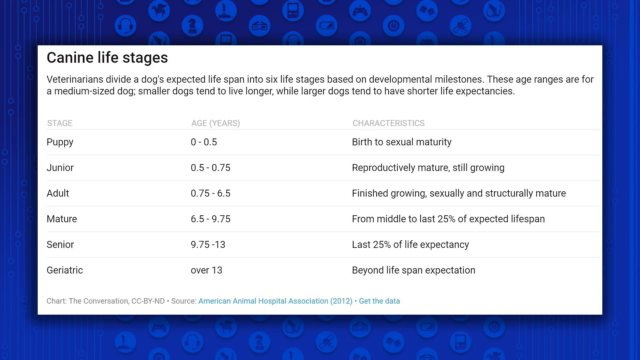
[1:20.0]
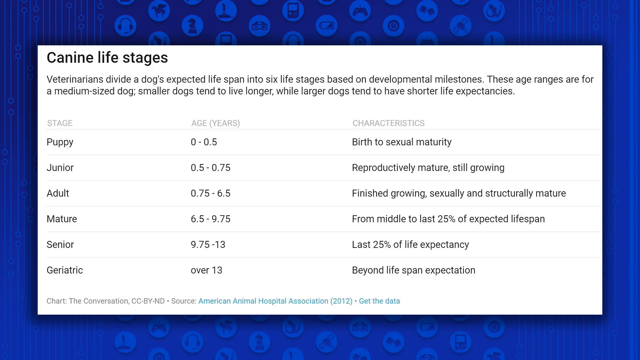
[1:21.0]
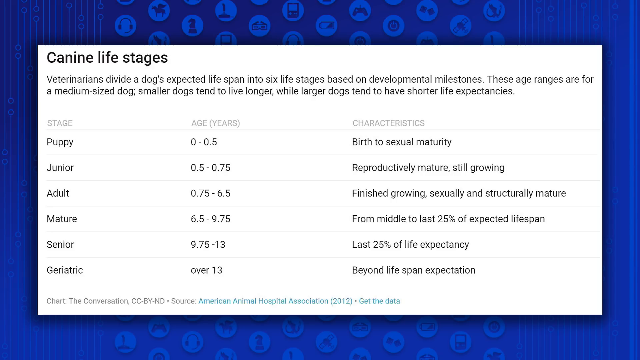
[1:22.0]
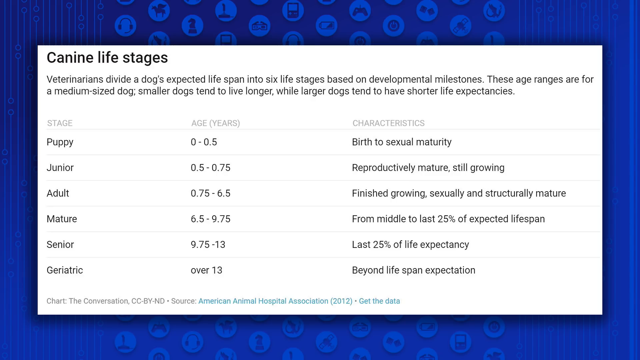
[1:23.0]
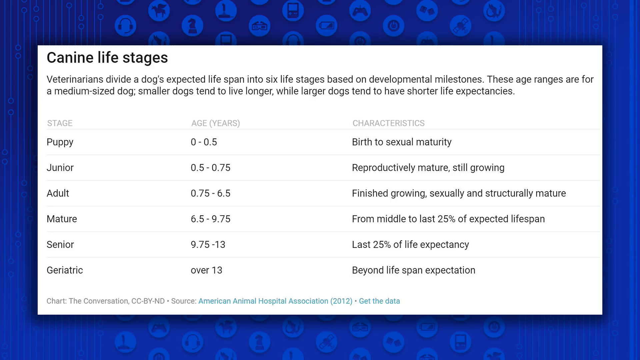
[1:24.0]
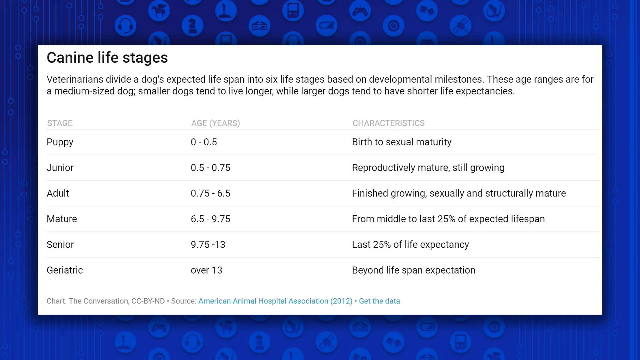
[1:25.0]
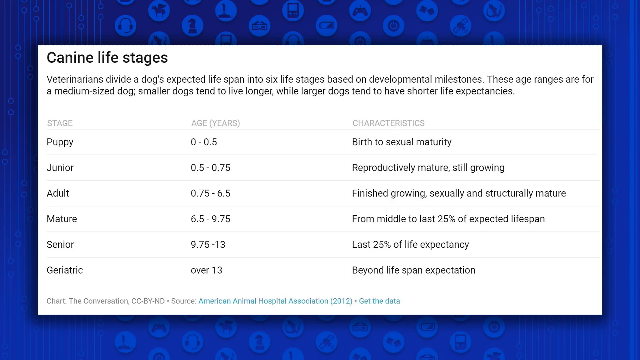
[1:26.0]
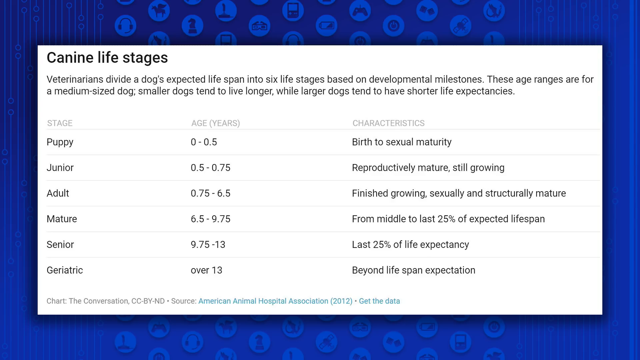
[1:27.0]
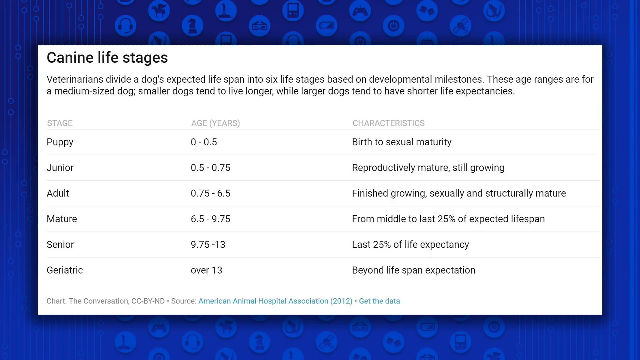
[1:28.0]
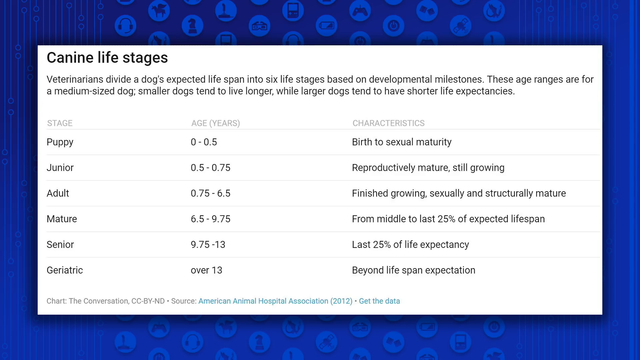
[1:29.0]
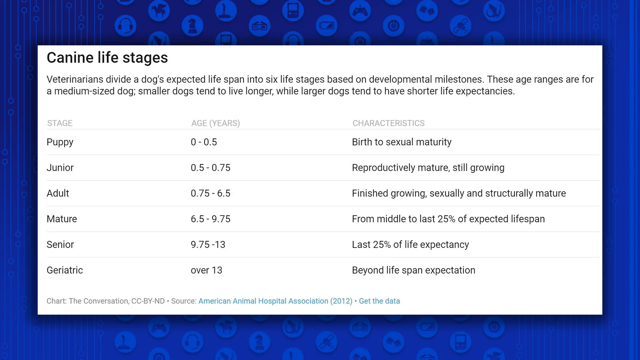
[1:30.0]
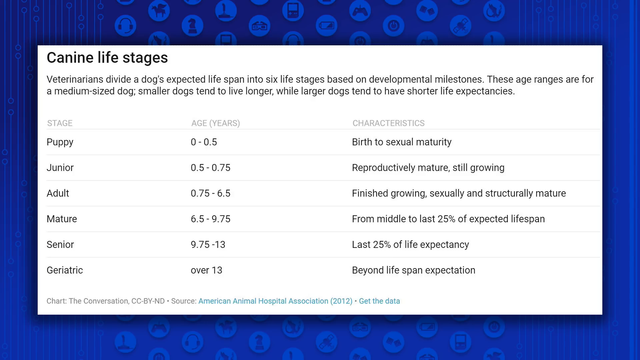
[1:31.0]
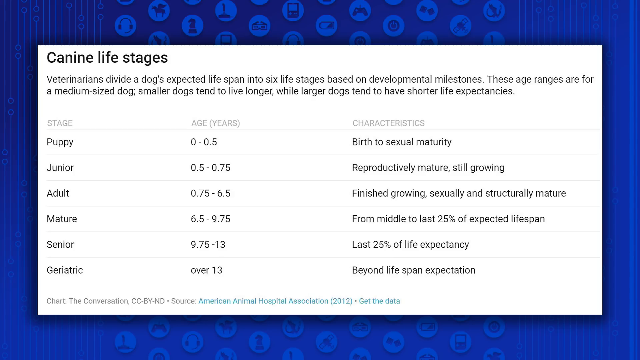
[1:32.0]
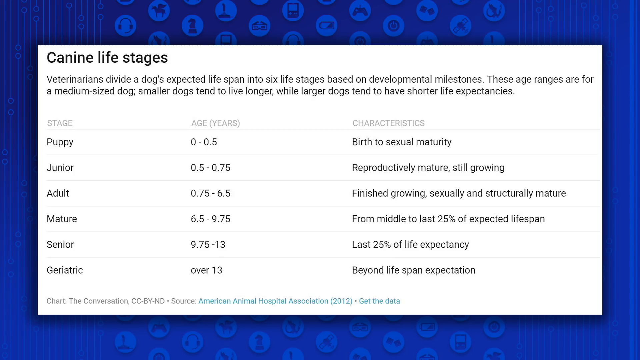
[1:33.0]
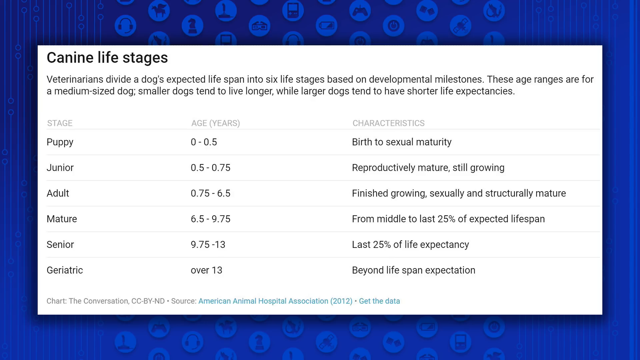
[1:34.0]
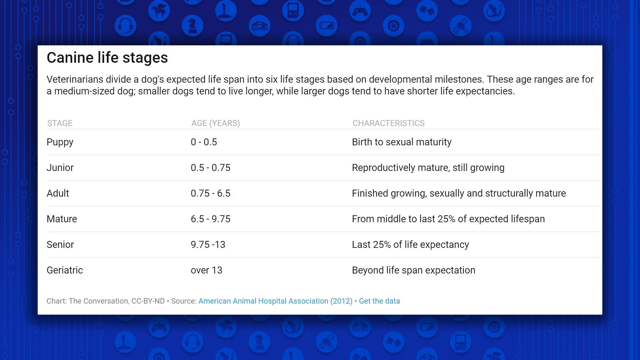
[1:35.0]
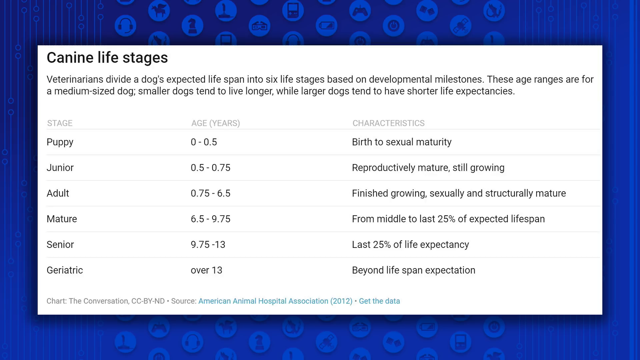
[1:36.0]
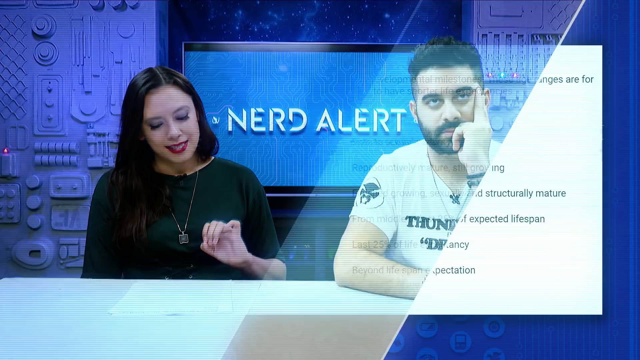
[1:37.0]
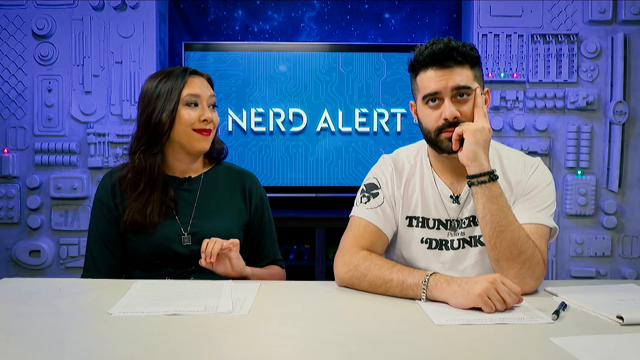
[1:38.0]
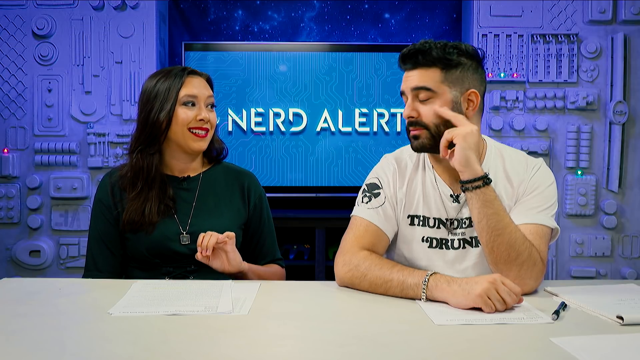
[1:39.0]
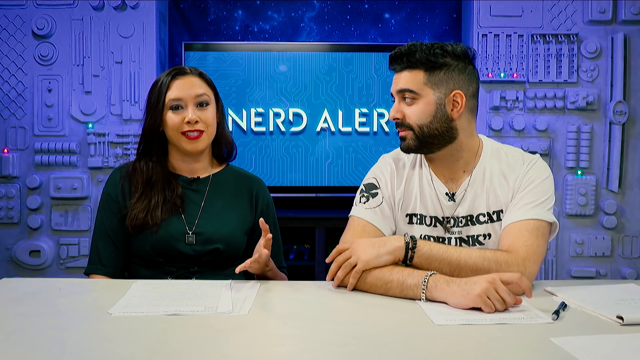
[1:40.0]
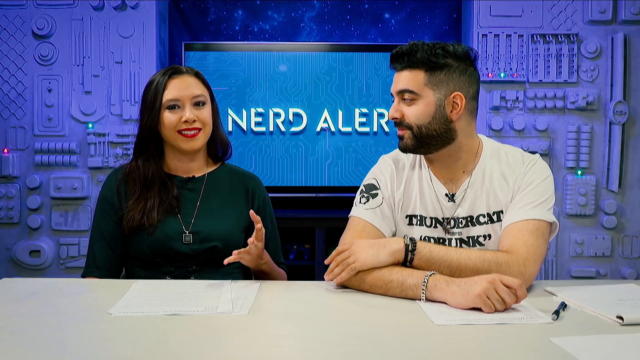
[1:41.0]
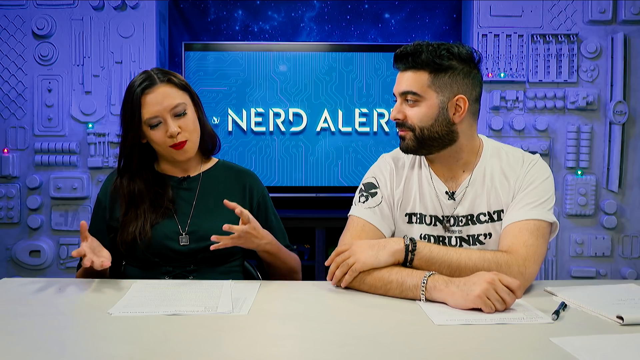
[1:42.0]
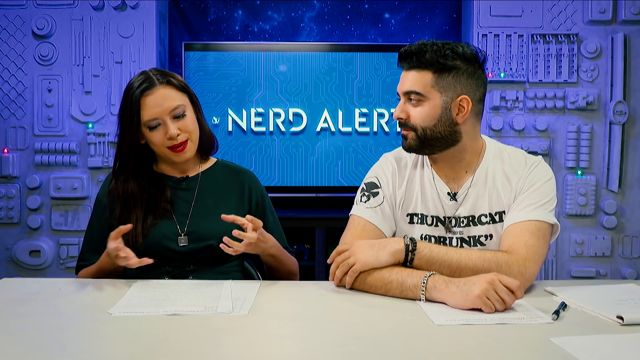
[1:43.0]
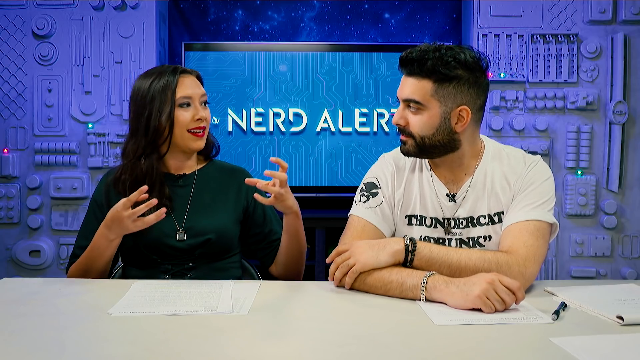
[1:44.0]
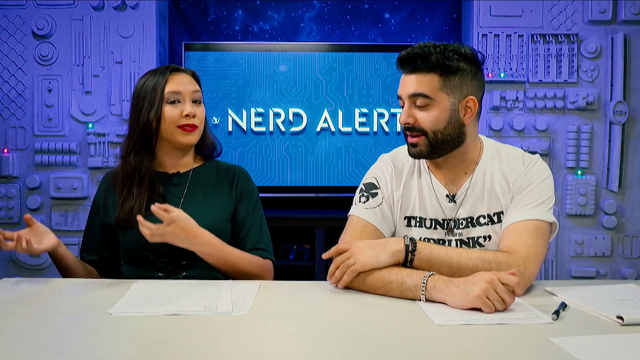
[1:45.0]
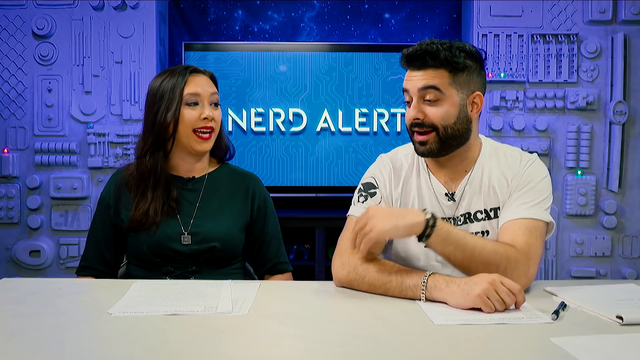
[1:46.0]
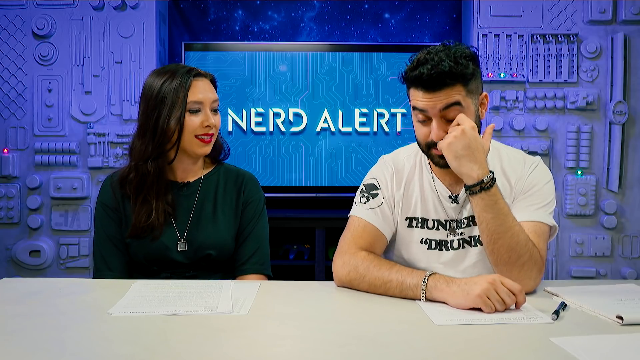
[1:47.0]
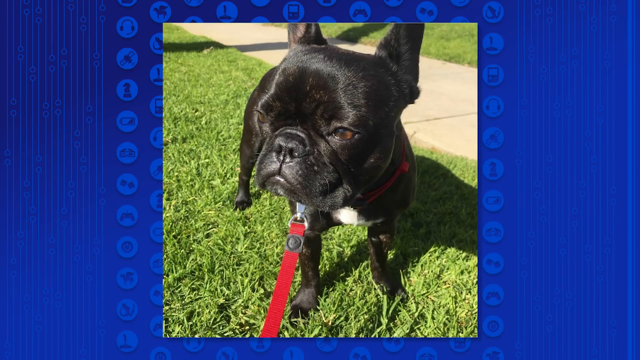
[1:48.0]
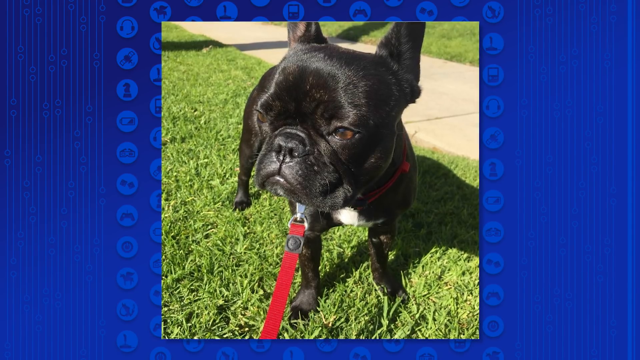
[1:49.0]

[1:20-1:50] A screen shows a white panel with black text over a blue background covered in small icons, including a microphone and a gaming controller, with some icons too tiny to make out. The panel shows the topic "canine life stages" in black in a normal font, with a sentence underneath reading "veterinarians divide a dog's expected lifespan into six life stages", and it lists the life stages of a dog along with their characteristics and ages. A close-up then shows the woman, wearing red lipstick, smiling and looking at the man, then talking while looking at the screen, smiling, moving her hands and making shapes with the five fingers of her left hand. The man puts his hand on his face while looking at her and looks like he does not agree with what she is saying; he then tries to clean his left ear. He wears a white t-shirt with writing in black, and the woman wears her green top; both wear necklaces. The background is blue, with a screen reading "nerd alert", and farther back there is a flashing red light on the left side and other lights on the right side, in what looks like the inside of an electrical box. Another close-up shows a small black dog that looks like a chihuahua, with a white chest and a red leash.